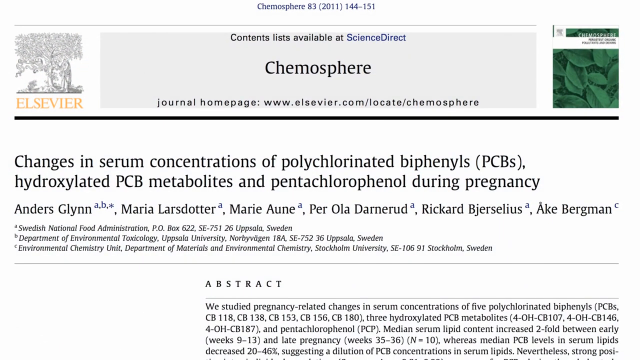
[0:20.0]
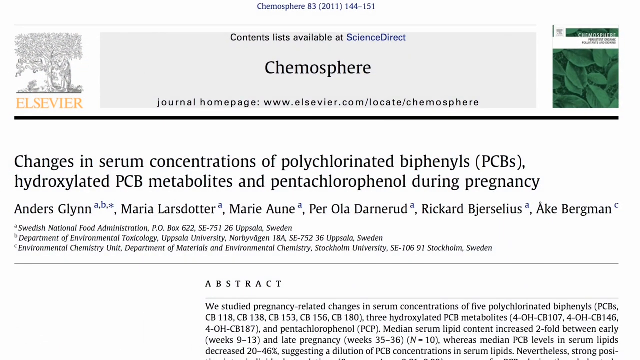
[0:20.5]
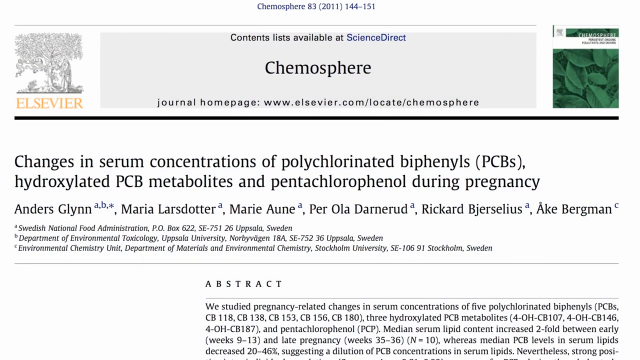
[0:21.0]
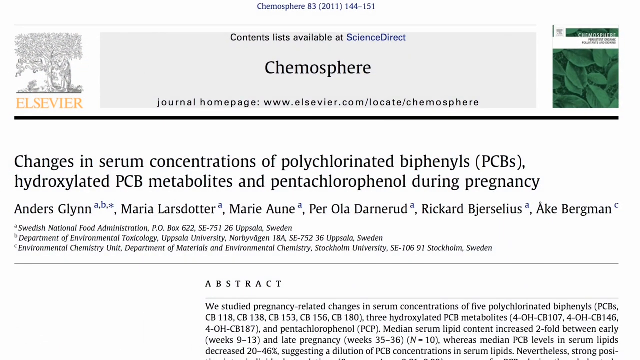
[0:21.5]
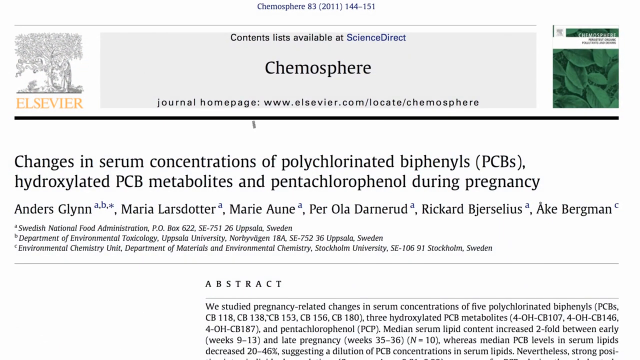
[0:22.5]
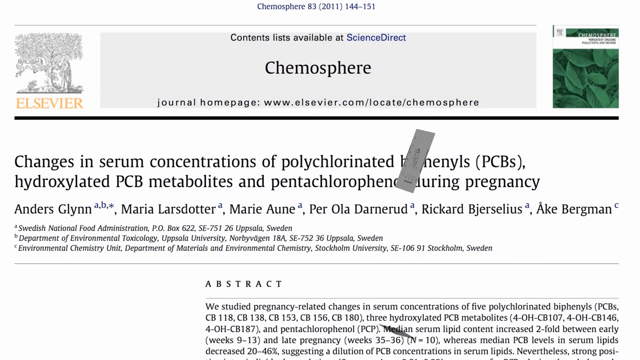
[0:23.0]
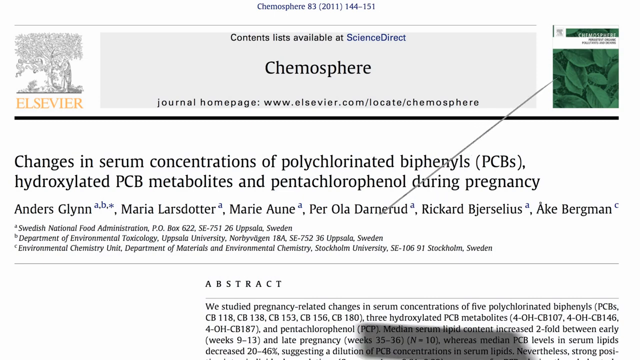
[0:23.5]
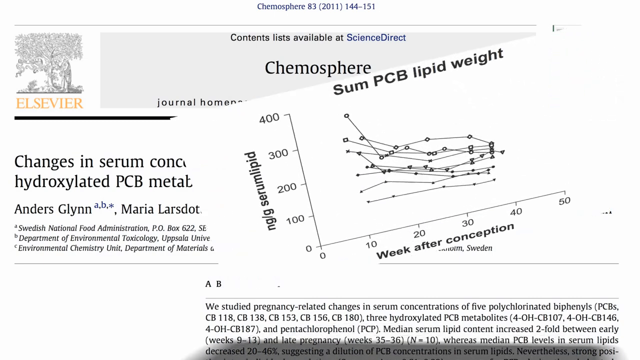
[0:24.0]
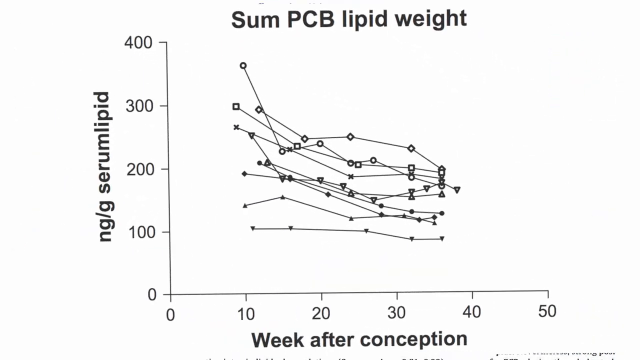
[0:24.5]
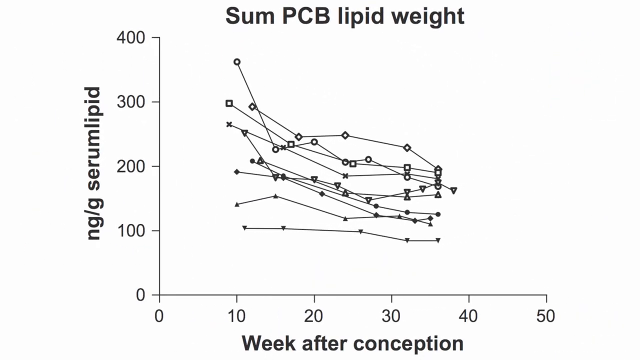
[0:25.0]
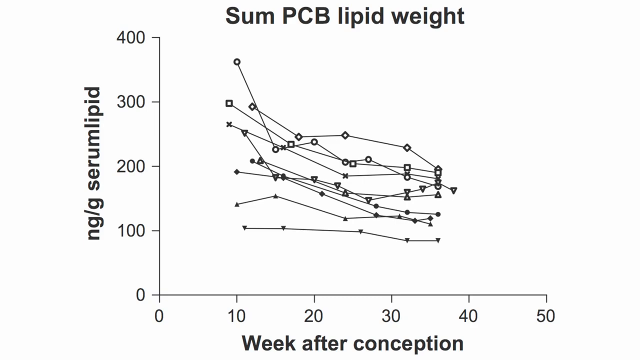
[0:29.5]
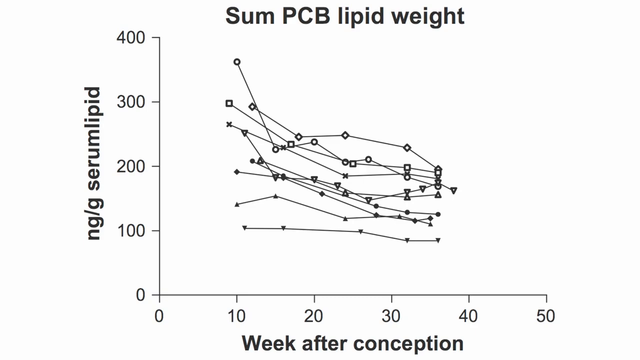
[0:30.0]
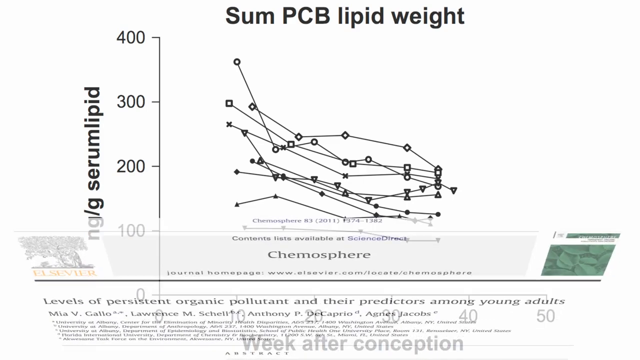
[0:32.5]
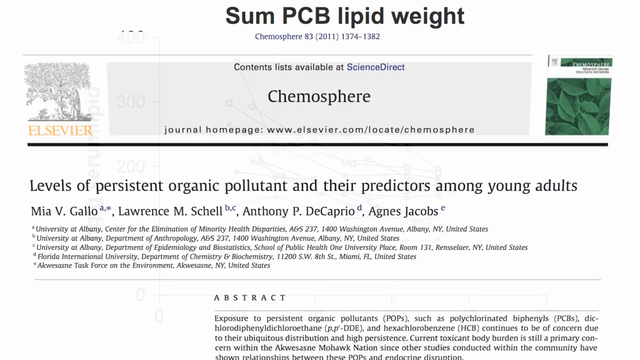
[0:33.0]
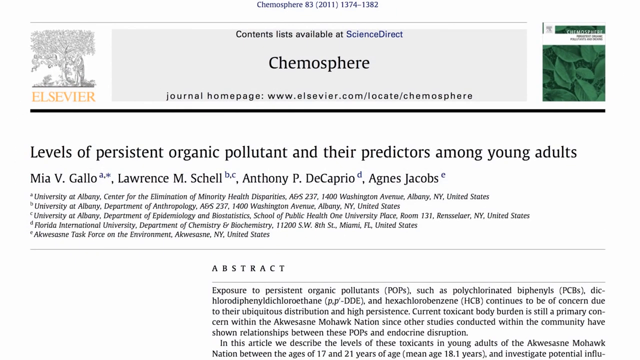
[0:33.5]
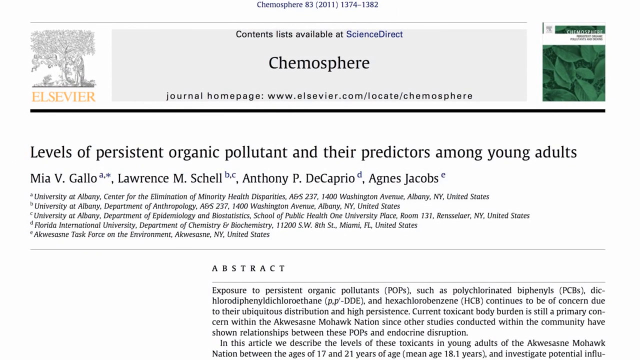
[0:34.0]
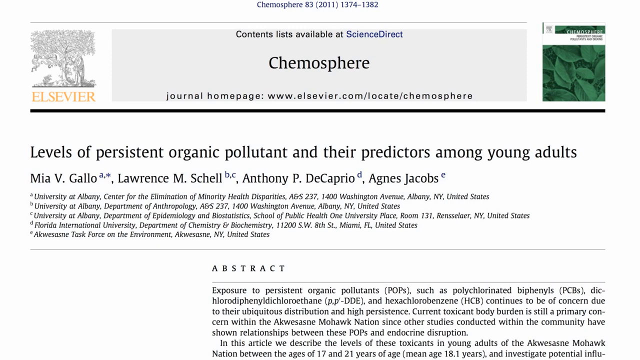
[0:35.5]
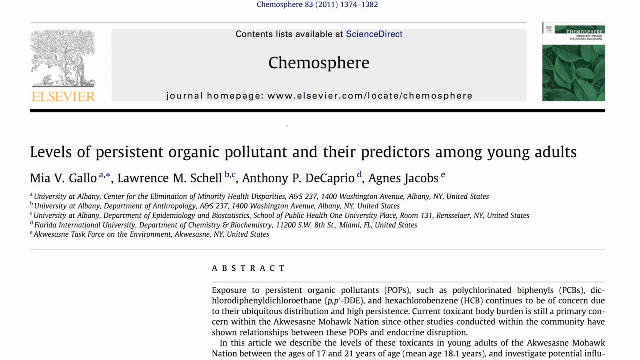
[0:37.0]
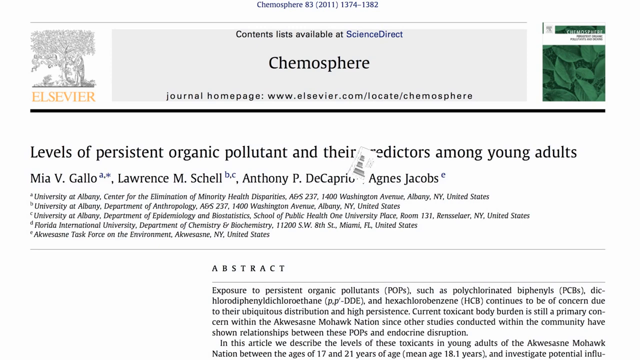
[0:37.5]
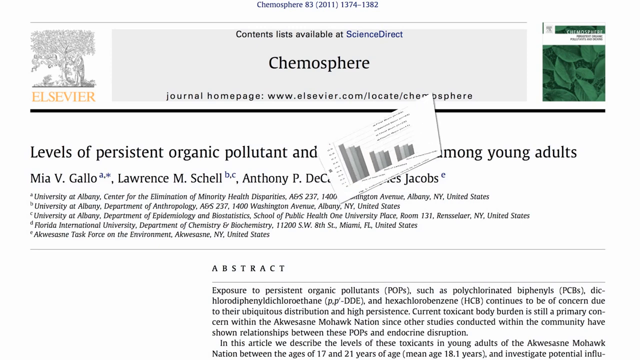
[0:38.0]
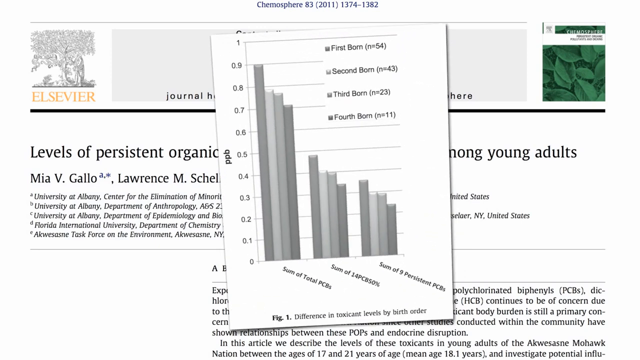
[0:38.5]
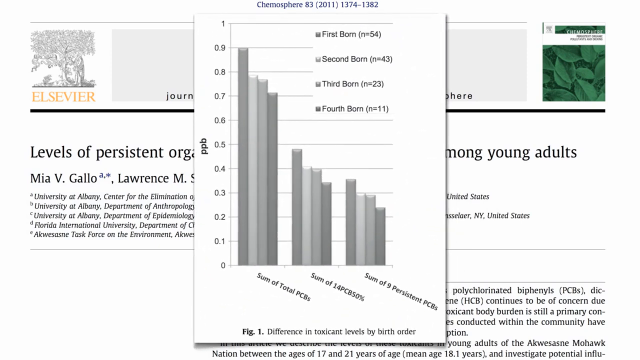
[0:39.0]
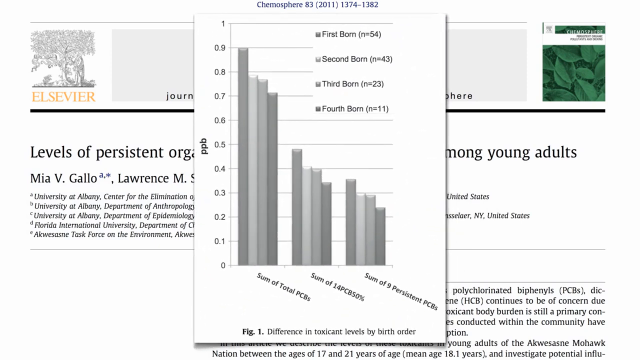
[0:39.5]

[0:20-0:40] A white page has the word "chemosphere" in black at the top. Underneath it reads "changes in serum concentrations of polychlorinated biphenyls (PCBS), hydroxylated PCB metabolites, and pentachlorophenol during pregnancy." The screen changes to a chart with "sum PCB lipid weight" in black at the top. Below is a graph with a horizontal axis numbered 0 to 50 and a vertical axis numbered 0 to 400, and "NG/G serum lipid" along the left side. The screen changes again: at the top it says "chemosphere," and underneath, "levels of persistent organic pollutant and their predictors among young adults." A graph appears across the middle of the screen with 11 horizontal lines numbered 0, 0.1, 0.2, 0.3, 0.4 and so on up to 0.9, then 1. To the right of the numbers are vertical bars side by side in different shades of gray. Along the right side of the bars are the labels "first born, second born, third born, fourth born," and along the bottom of the graph it says "sum of total PCBs, sum of 14 PCBs, sum of five persistent PCBs."